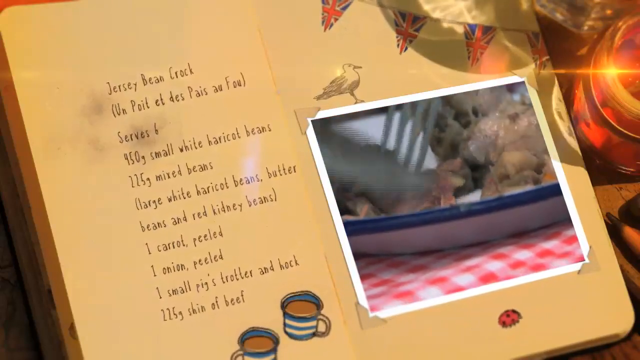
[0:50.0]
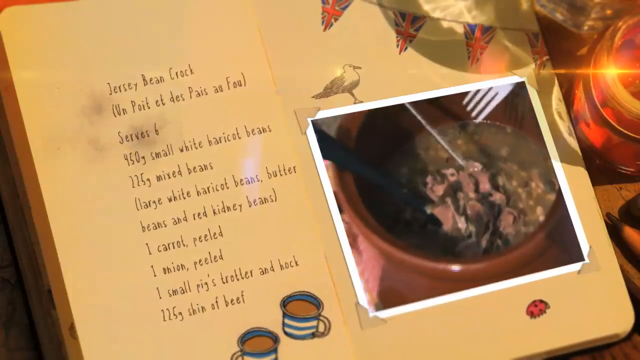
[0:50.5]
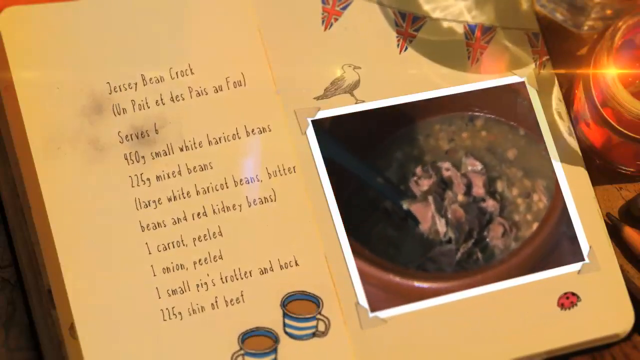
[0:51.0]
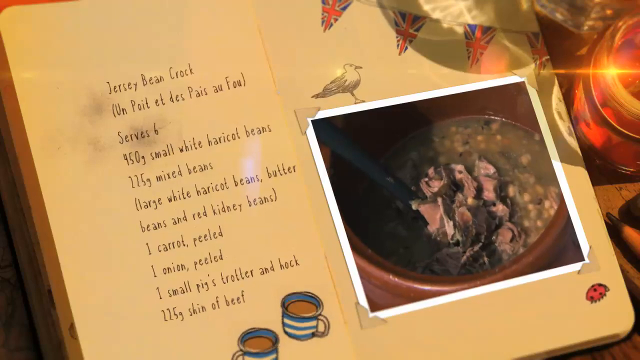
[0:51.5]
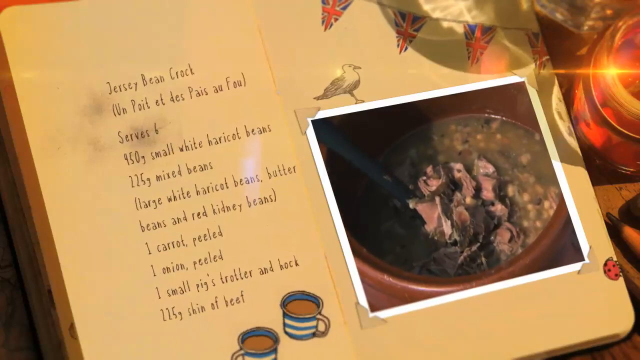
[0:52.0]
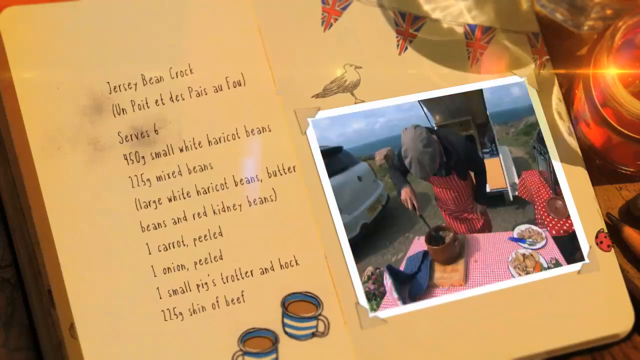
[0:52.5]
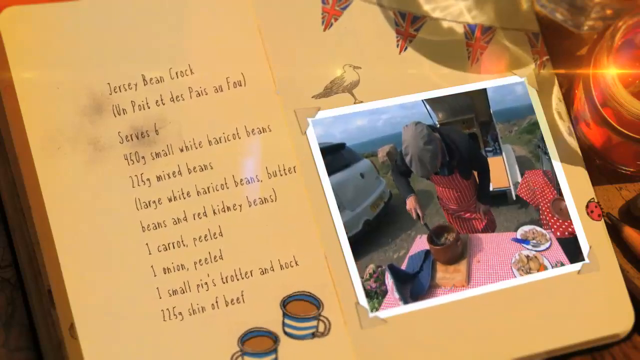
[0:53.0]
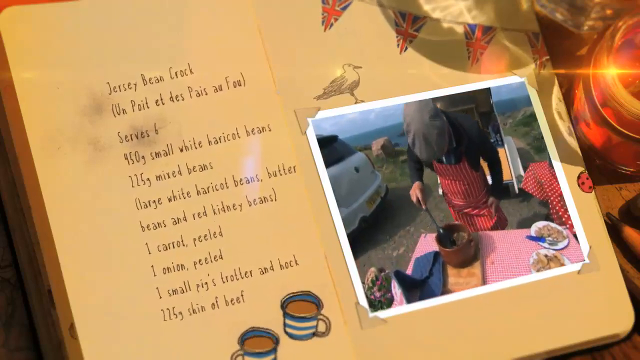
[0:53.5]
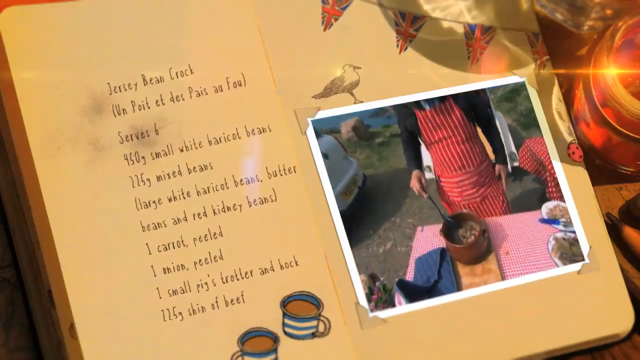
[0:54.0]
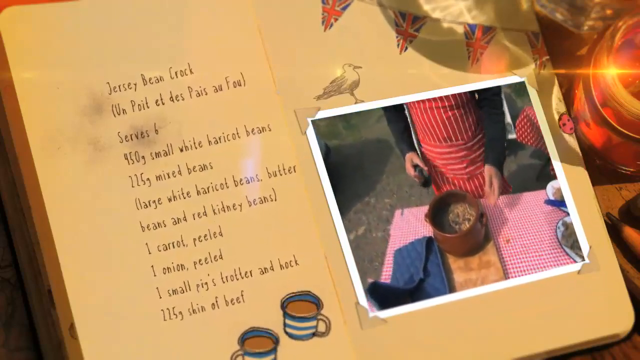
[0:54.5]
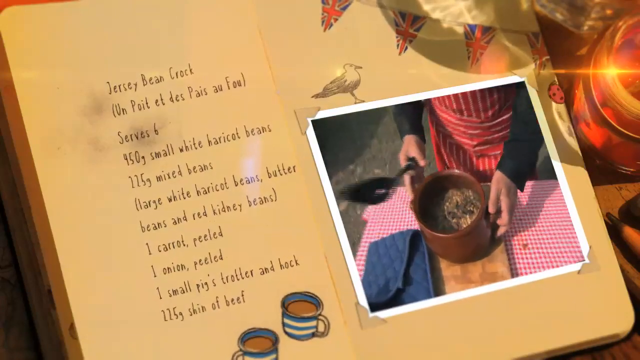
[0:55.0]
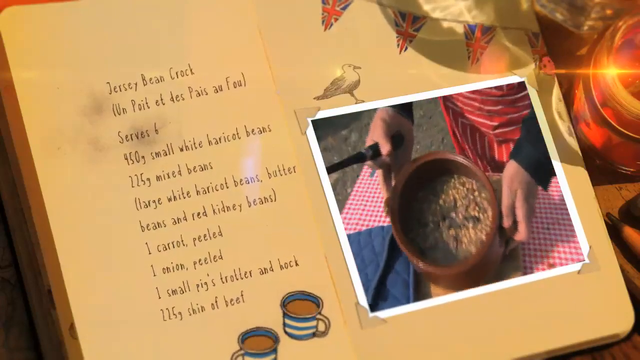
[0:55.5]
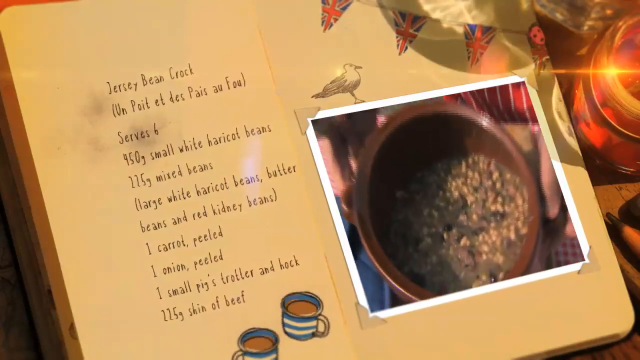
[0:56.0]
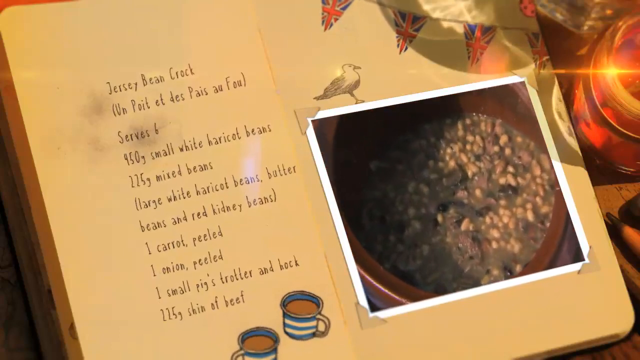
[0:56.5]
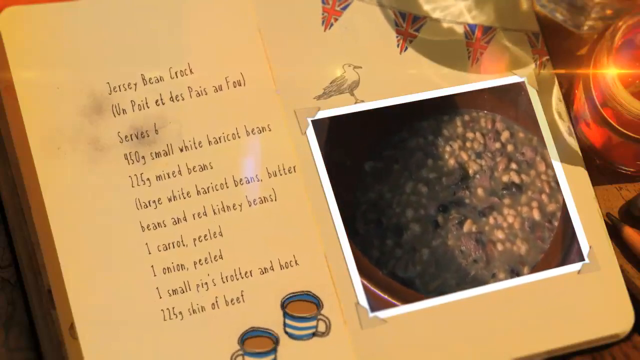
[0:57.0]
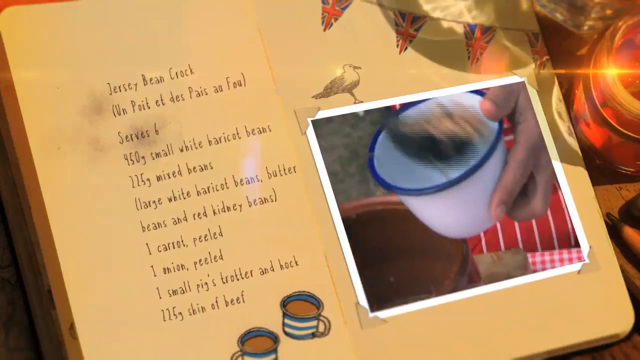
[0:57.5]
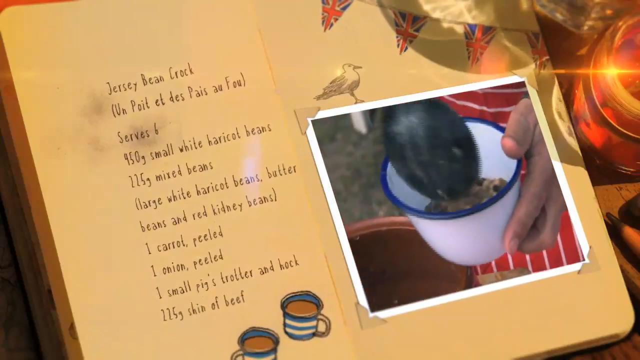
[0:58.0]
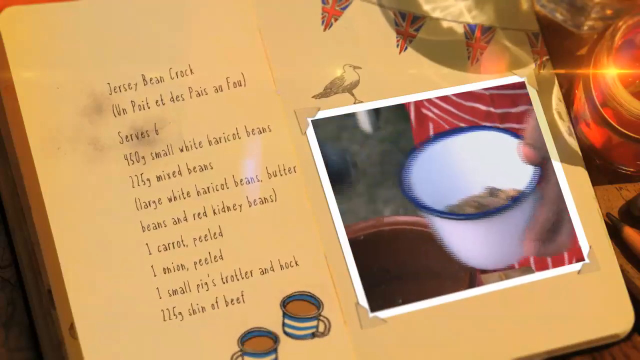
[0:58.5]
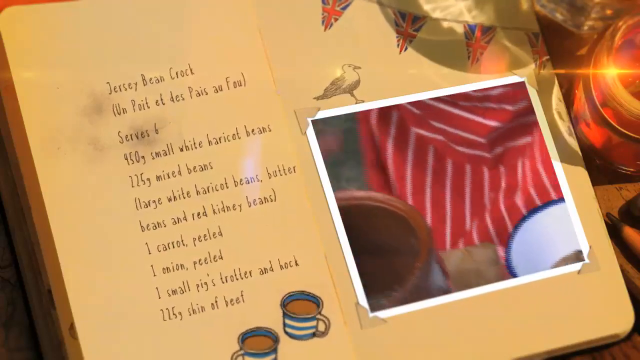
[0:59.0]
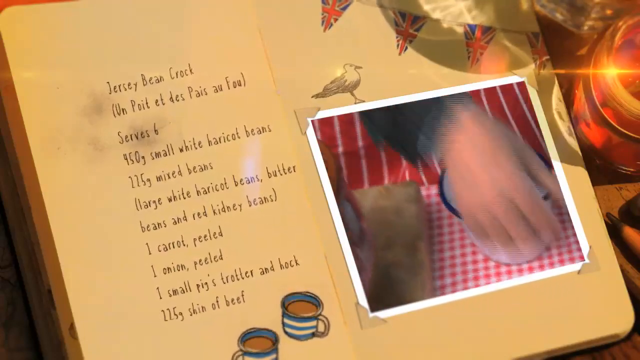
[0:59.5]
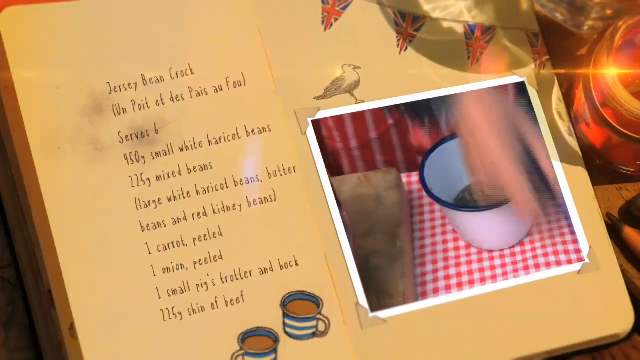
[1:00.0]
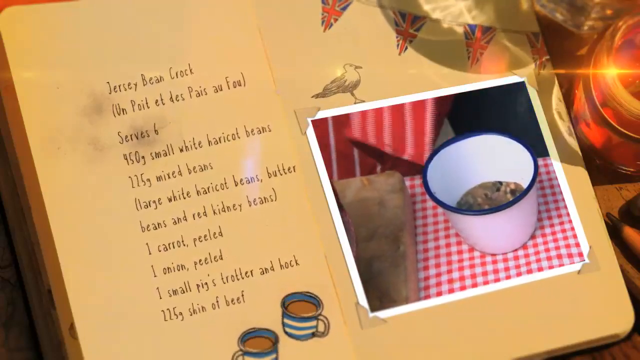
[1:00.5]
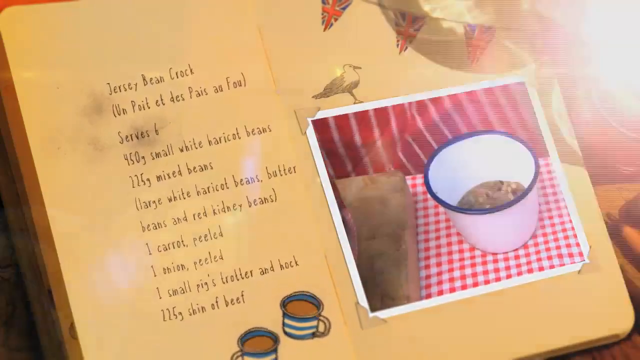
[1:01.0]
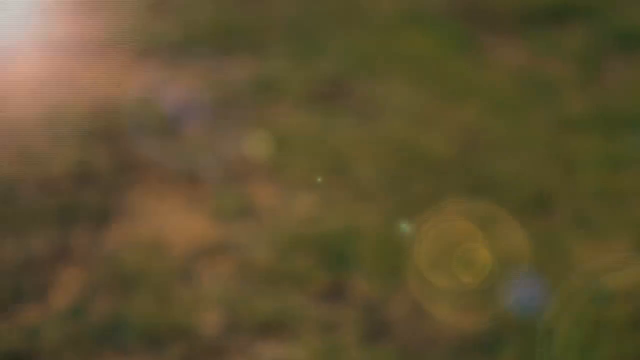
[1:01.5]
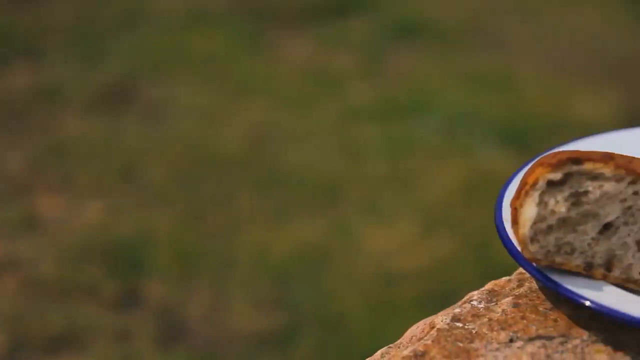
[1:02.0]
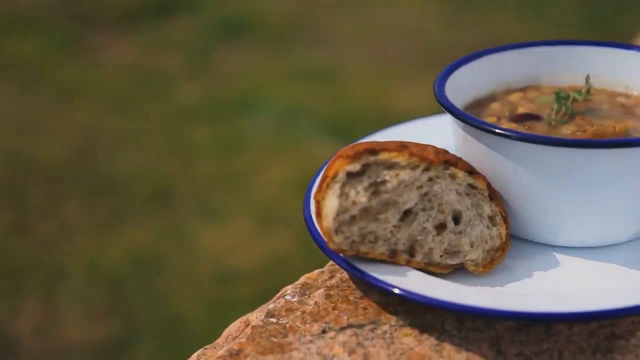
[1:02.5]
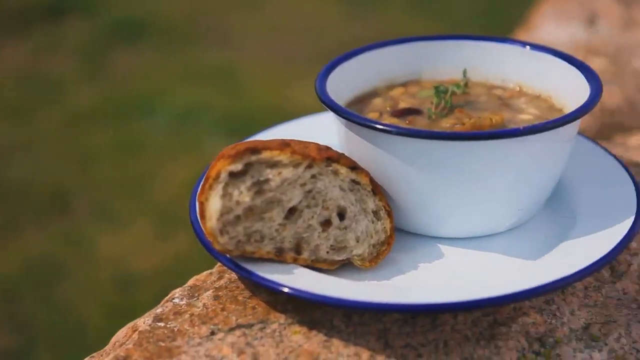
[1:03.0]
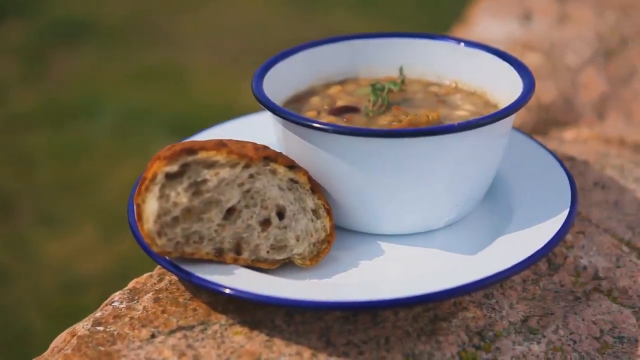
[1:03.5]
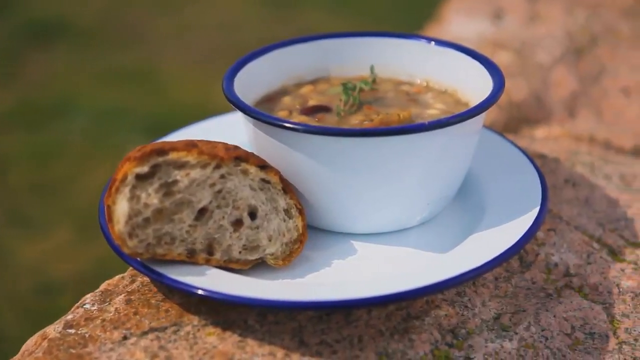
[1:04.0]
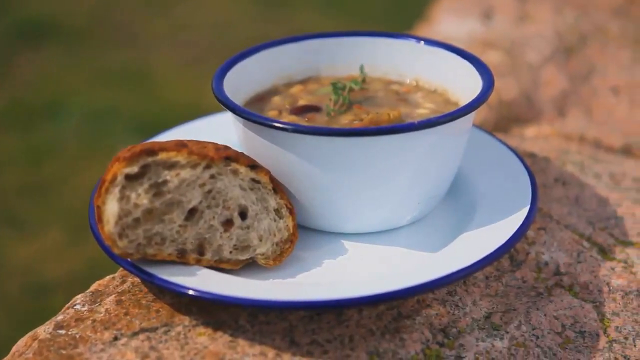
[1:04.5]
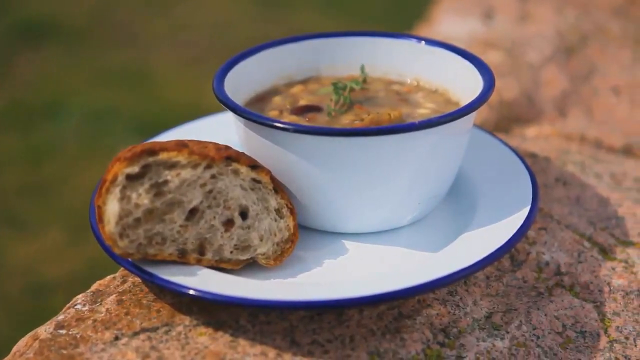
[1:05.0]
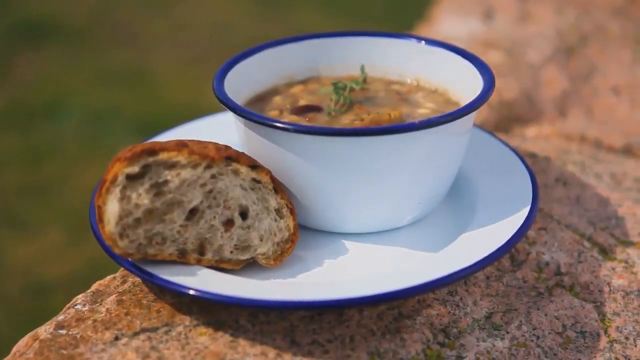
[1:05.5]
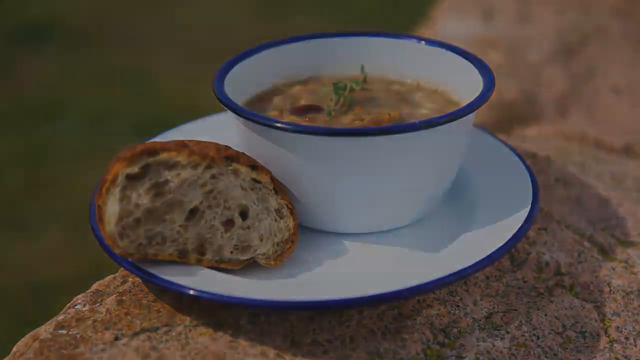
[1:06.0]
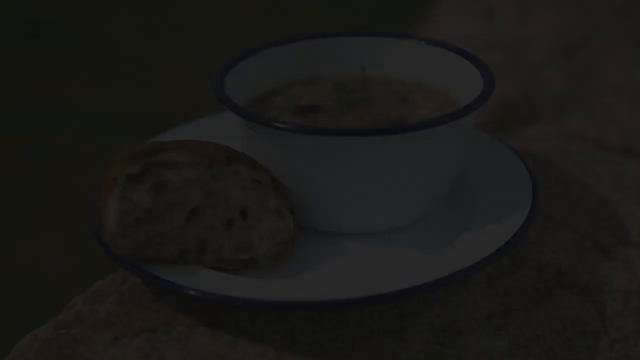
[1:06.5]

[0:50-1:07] He cuts the beef into smaller pieces, tosses it back into the casserole dish and mixes everything with a large spoon, then shows the contents in front of the camera. The pot is on a cutting board. With a ladle he puts the finished soup into a smaller bowl and places it next to the casserole dish. The ending shows the soup-based dish in a bowl on a large coaster, with a piece of bread next to the bowl; the plate has a blue outline around the rim.